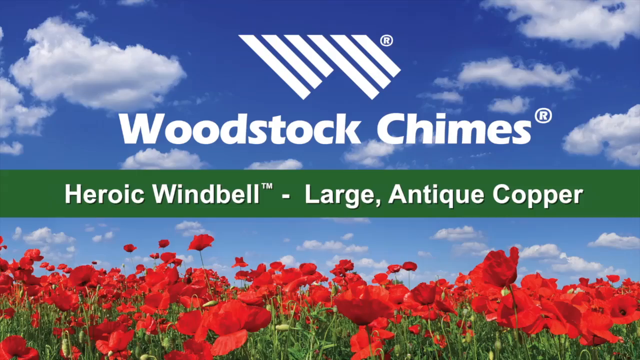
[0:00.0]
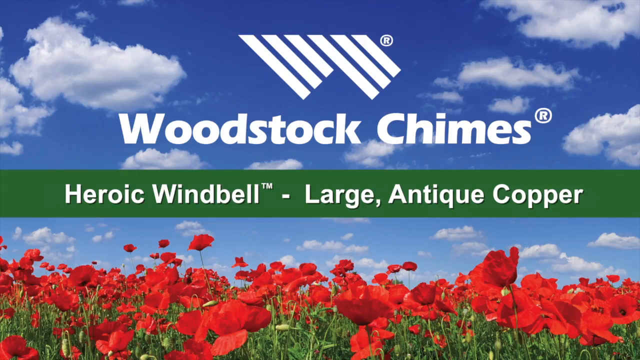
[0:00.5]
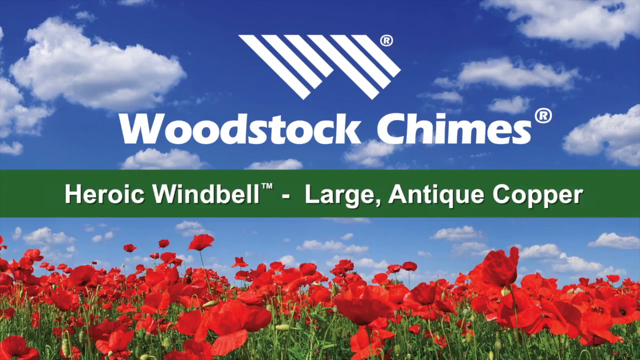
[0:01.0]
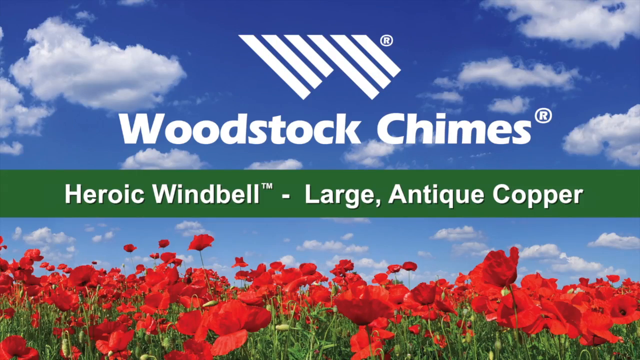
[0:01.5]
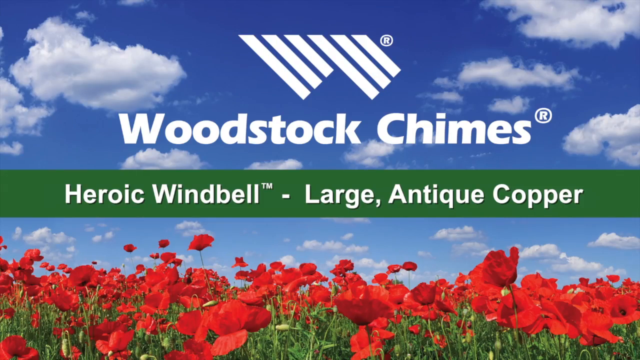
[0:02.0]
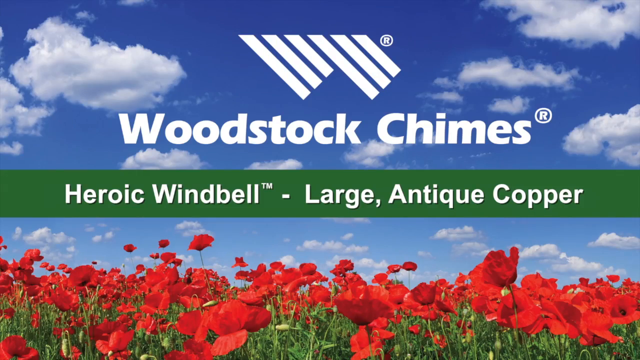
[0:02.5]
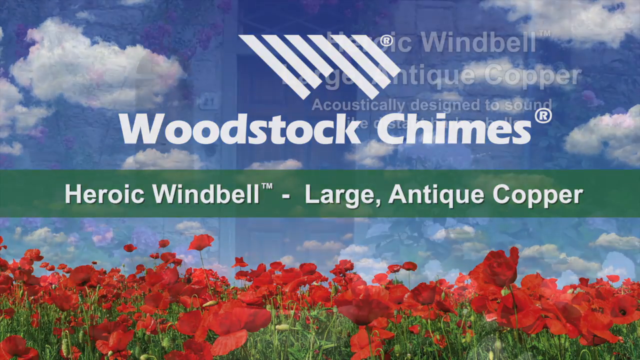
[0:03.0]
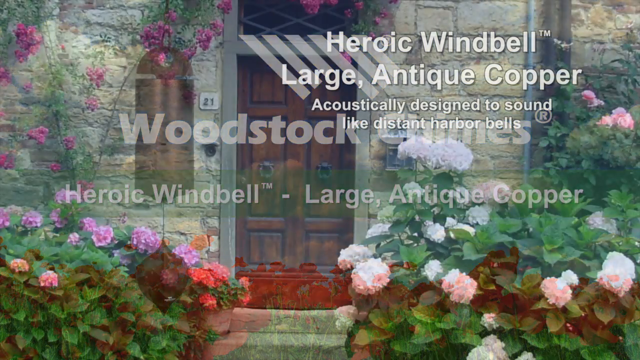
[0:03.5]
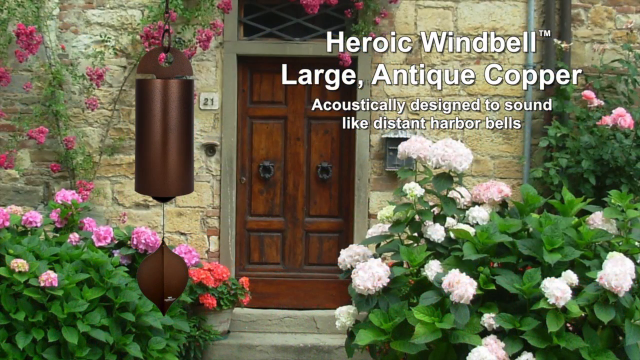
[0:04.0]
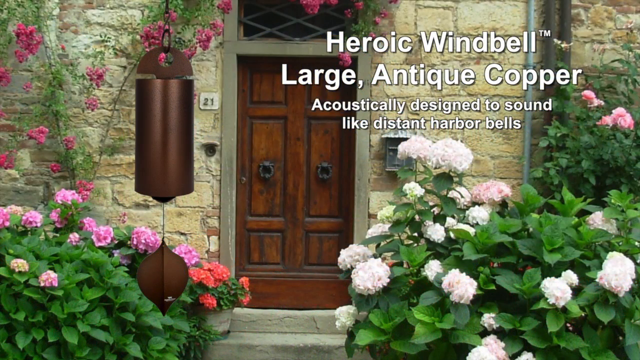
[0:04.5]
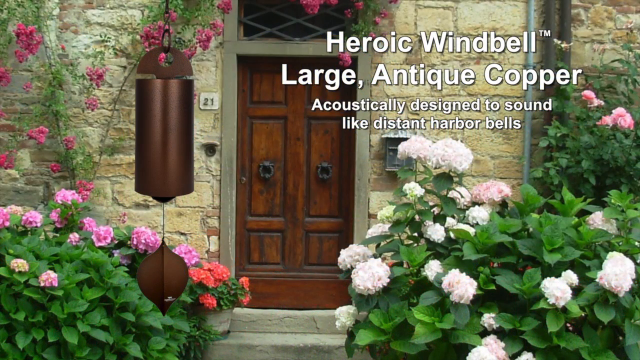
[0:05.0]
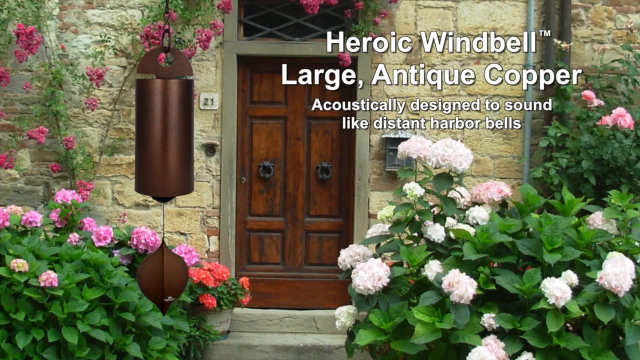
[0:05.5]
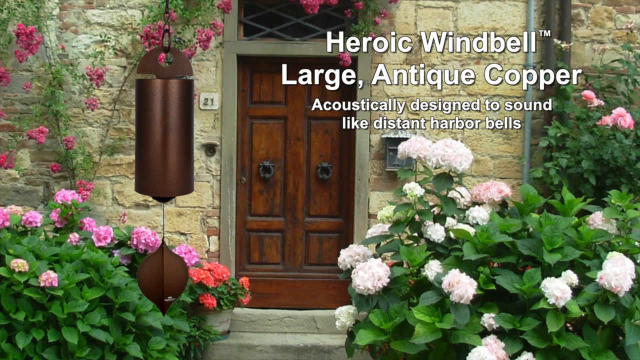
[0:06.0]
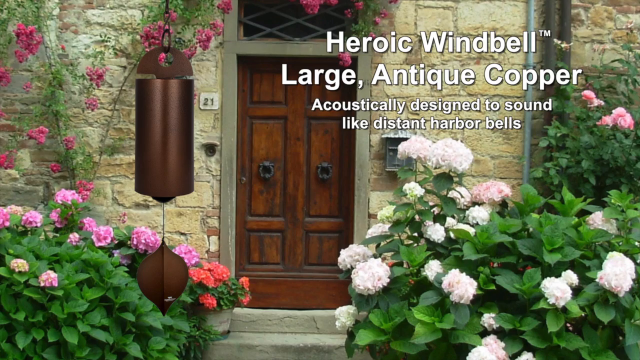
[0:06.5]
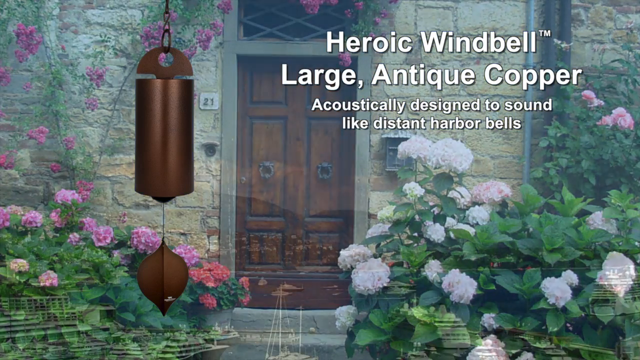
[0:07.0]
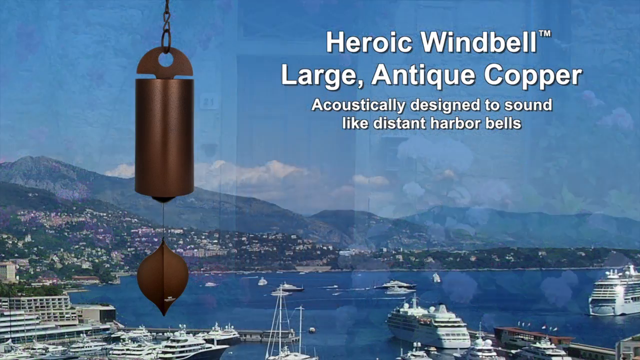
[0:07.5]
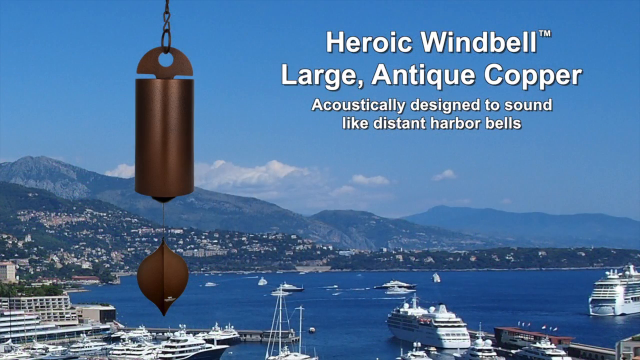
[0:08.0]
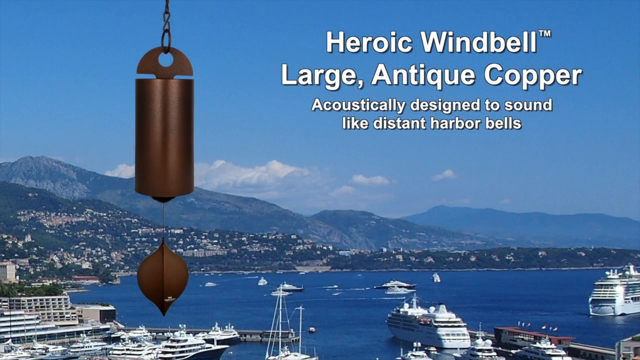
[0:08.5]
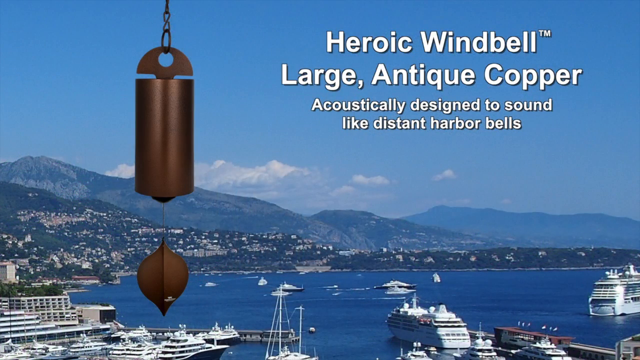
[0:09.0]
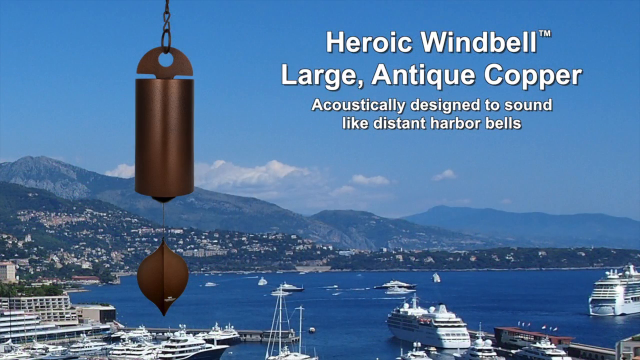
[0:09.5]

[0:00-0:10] The scene appears to be outdoors in a field of densely packed red flowers that are growing vigorously and are in full bloom. A blue sky is filled with fluffy clouds scattered throughout it. A logo appears toward the upper middle portion of the frame with the words "Woodstock Chimes." Below this are the words "Heroic windmill, large antique copper," written in white lettering on a rectangular green background. The video then shows the front of a home, seemingly the grand entranceway of a home or building. It is surrounded by flowers, and the building is made of stone. The front door is a medium-toned antique wood, with two door knockers on either side of the door. A metal wind chime hangs from one of the trees outside the home.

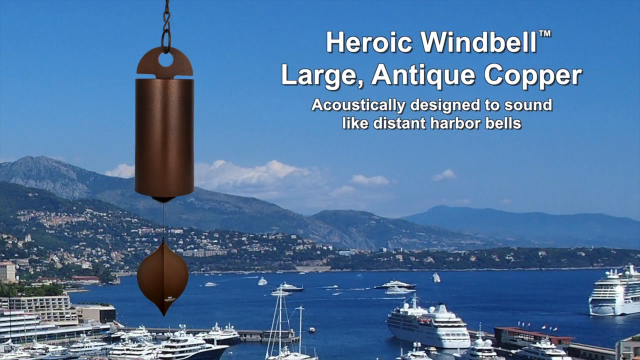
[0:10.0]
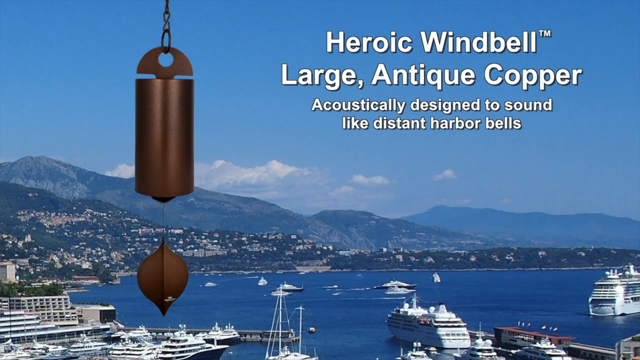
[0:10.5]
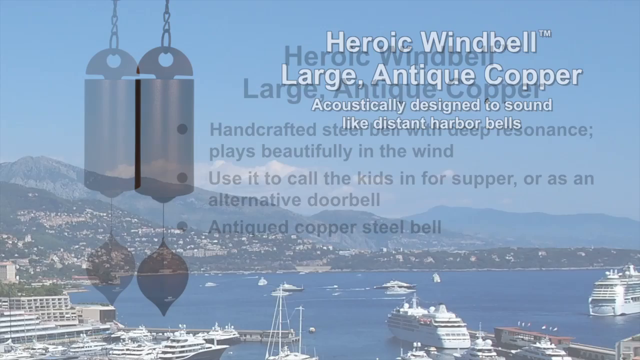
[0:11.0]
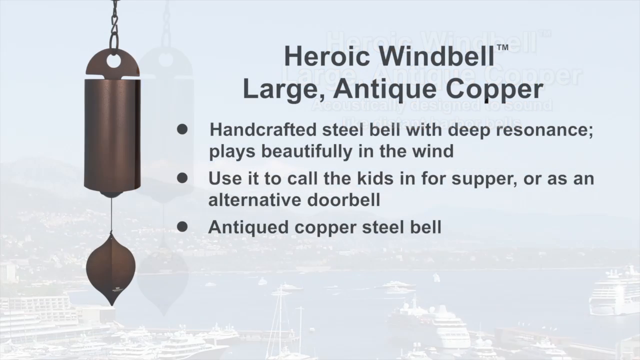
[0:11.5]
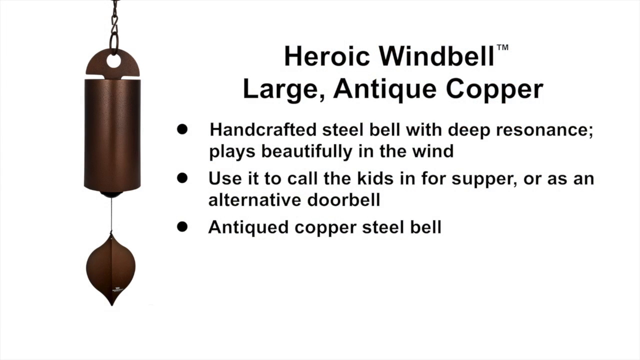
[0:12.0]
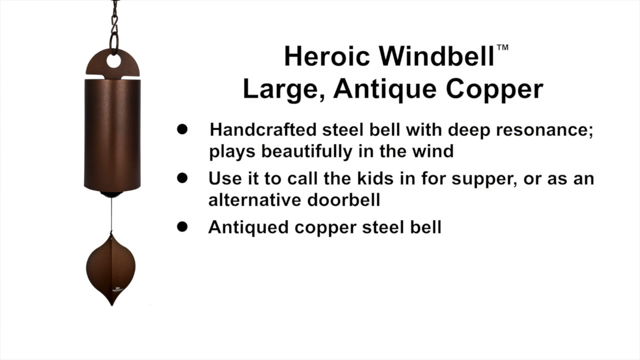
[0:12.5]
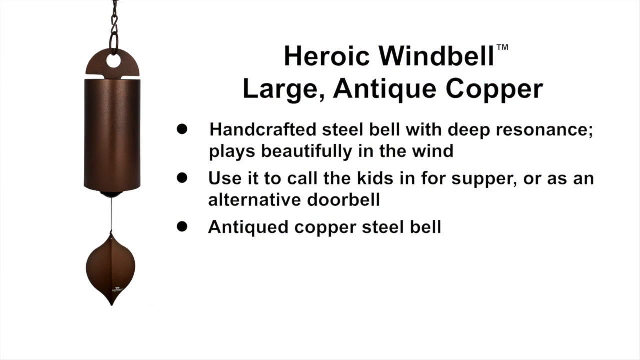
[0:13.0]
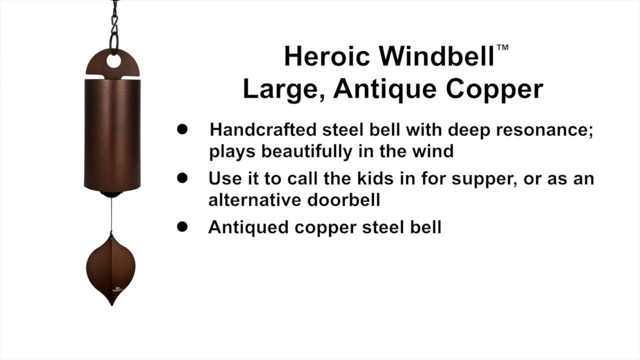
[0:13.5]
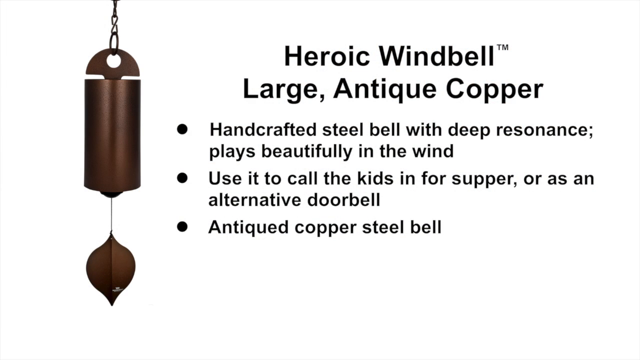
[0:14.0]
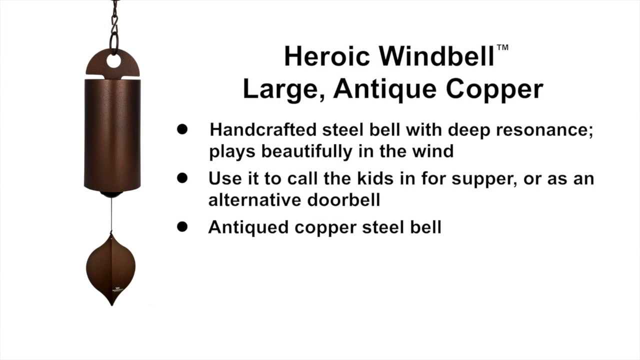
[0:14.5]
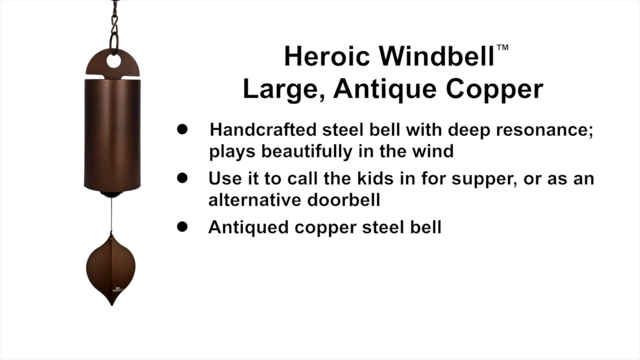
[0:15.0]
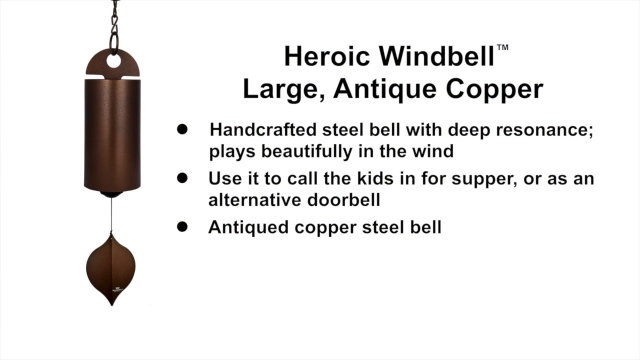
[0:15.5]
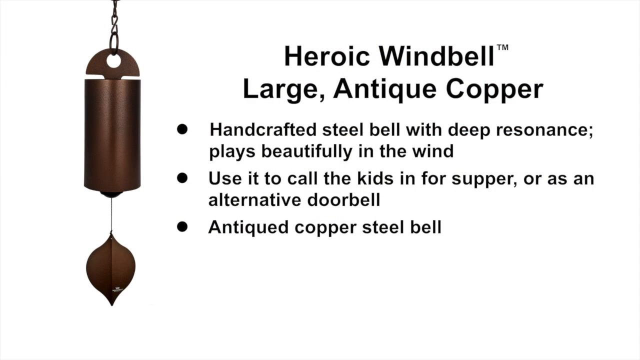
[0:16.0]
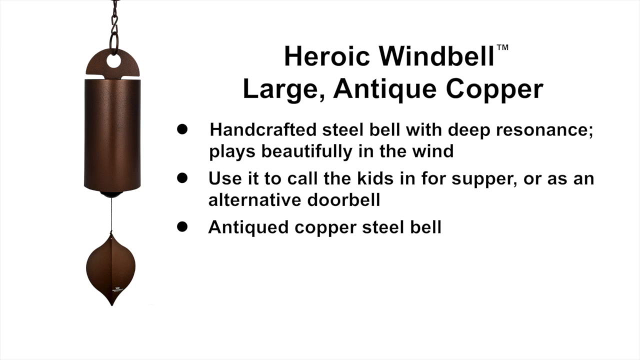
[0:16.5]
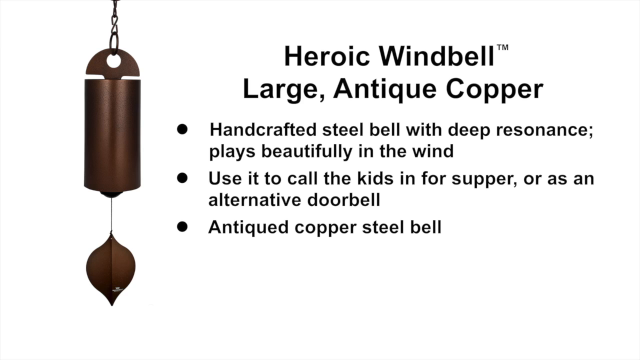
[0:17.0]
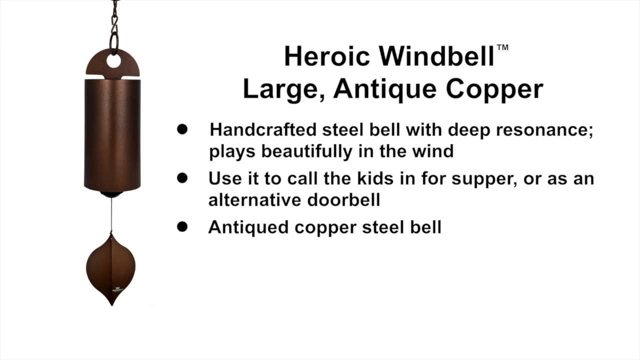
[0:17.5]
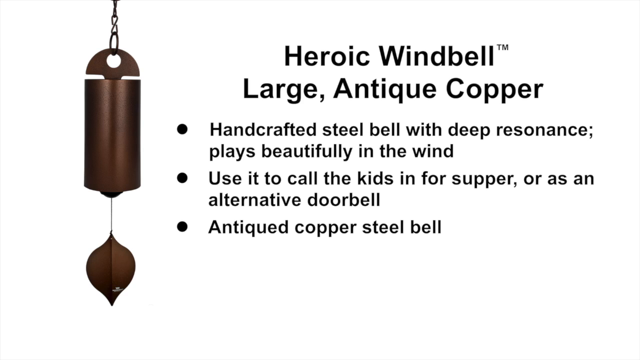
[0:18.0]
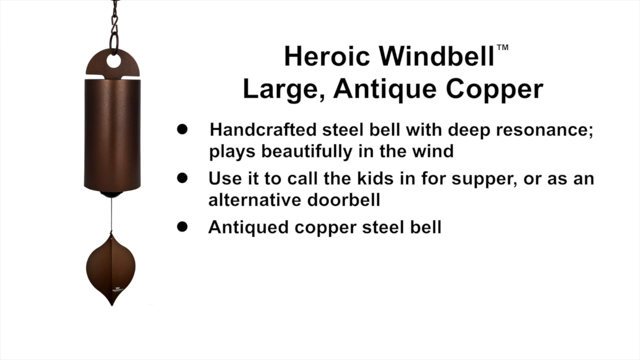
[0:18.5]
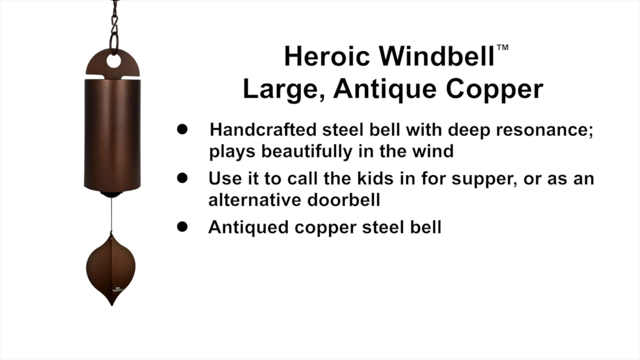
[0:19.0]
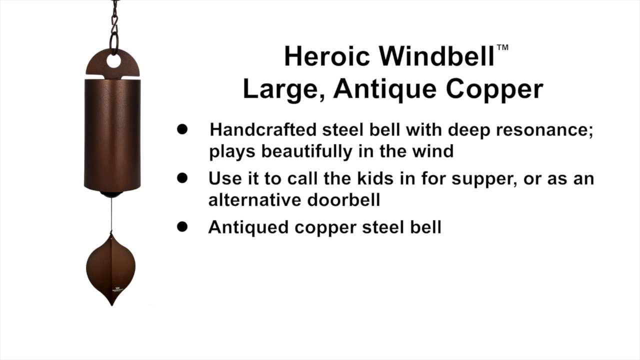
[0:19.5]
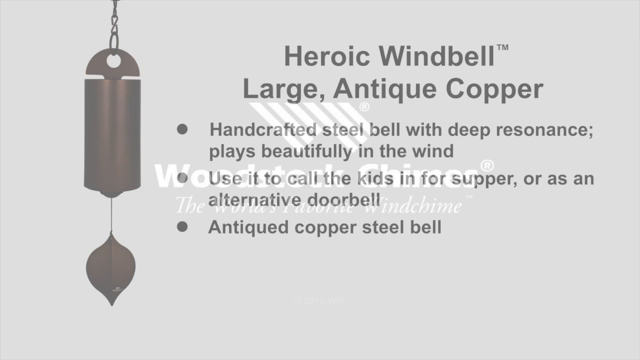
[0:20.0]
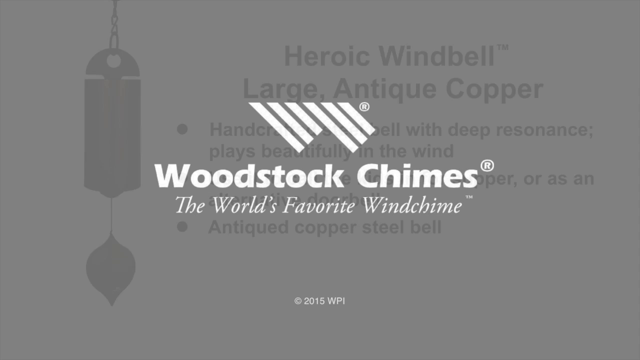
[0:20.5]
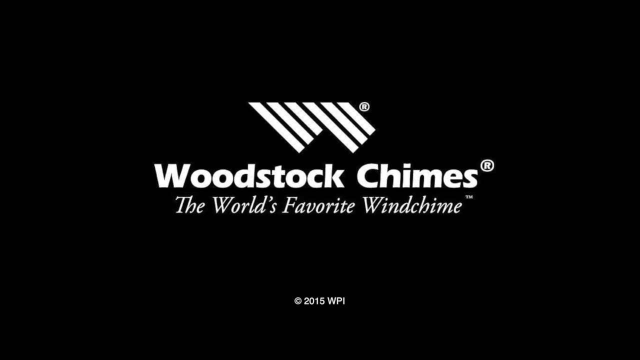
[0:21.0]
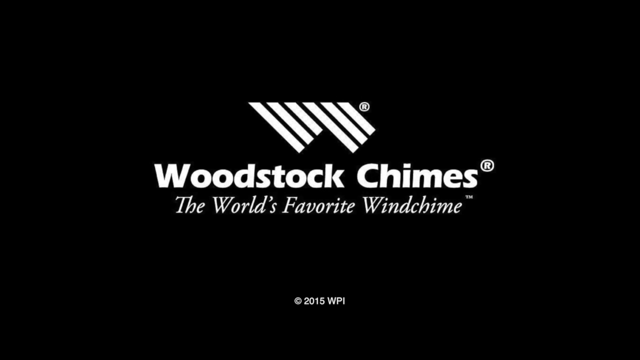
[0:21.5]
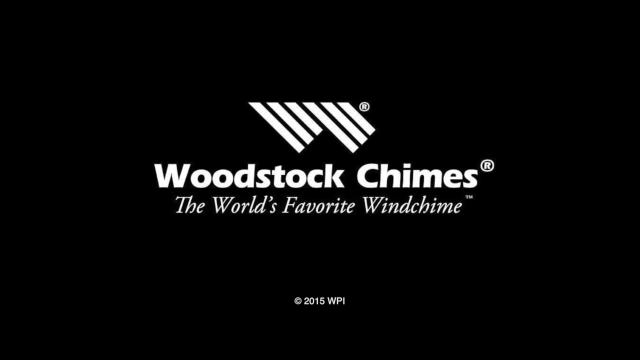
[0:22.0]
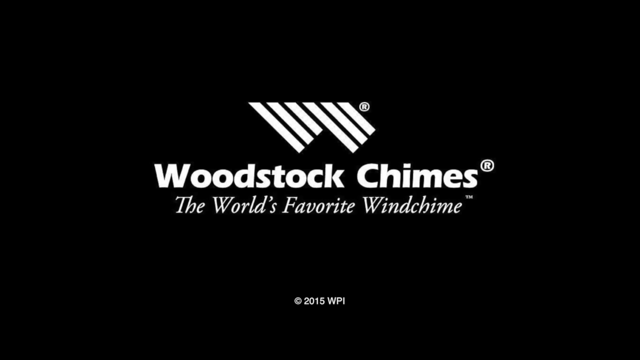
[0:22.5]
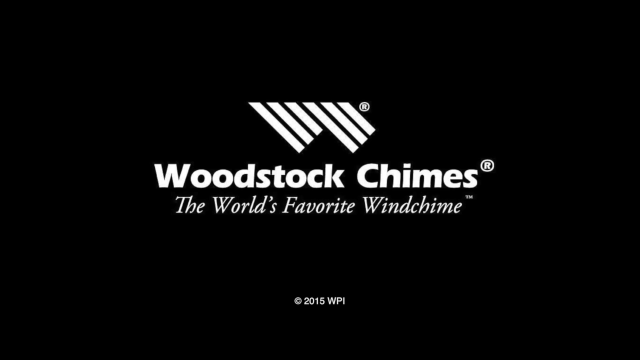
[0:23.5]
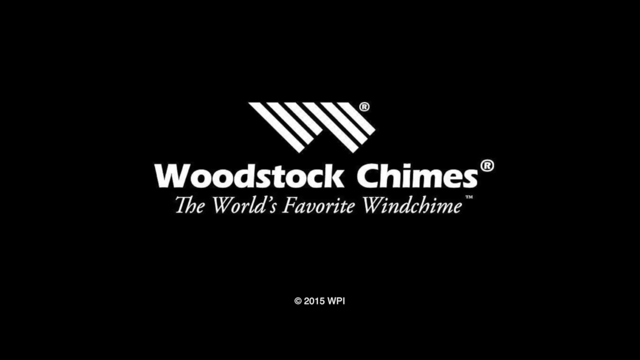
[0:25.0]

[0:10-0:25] A close-up shows the windmill, which is large and made of antique copper, hanging by itself. In the background is a large body of water with sailboats and other types of boats sailing on it, and a mountainside cascading behind. The sky is crystal blue with some clouds. The words "heroic windmill, large antique copper, acoustically designed to sound like distant harbor bells" appear on screen over the harbor. Next, against a white background, another close-up of the windmill shows that the wind bell is tubular in shape. It hangs from what appears to be a chain and has an adornment hanging from it that looks like a leaf.